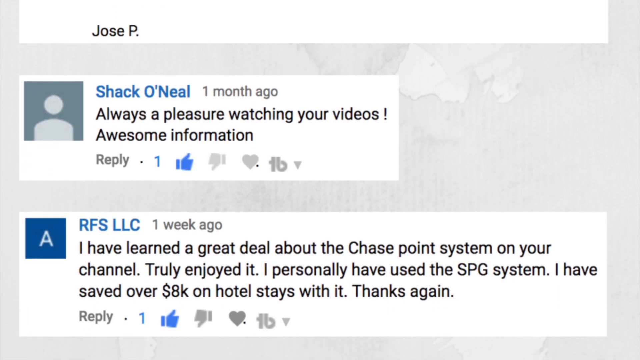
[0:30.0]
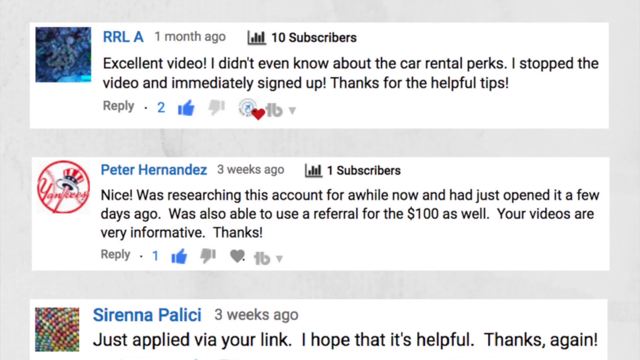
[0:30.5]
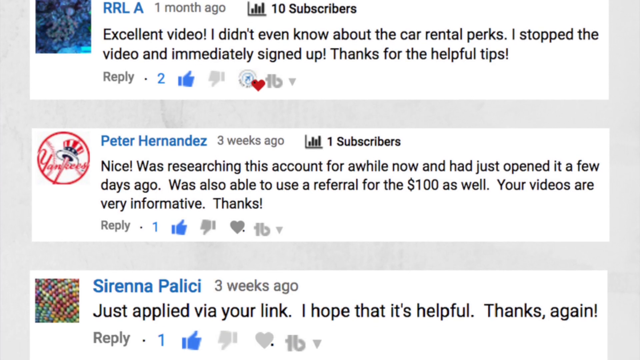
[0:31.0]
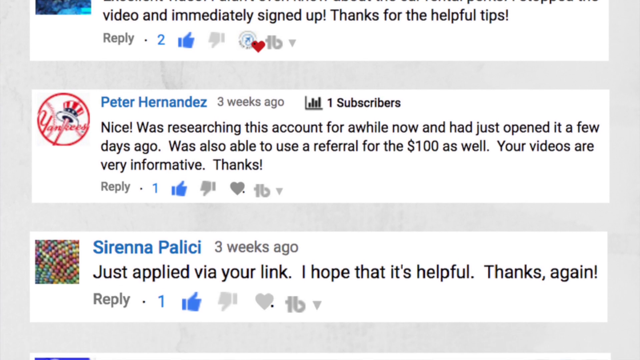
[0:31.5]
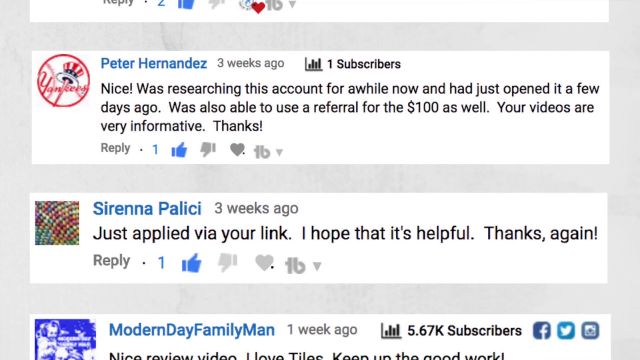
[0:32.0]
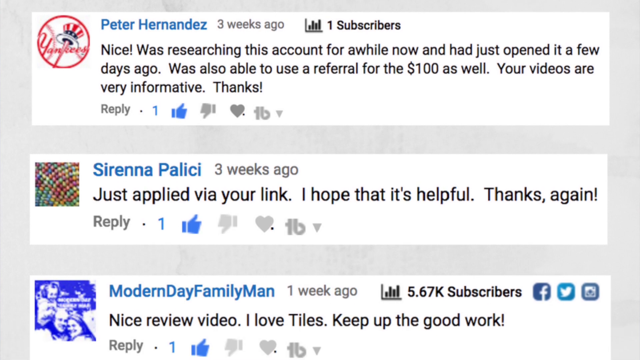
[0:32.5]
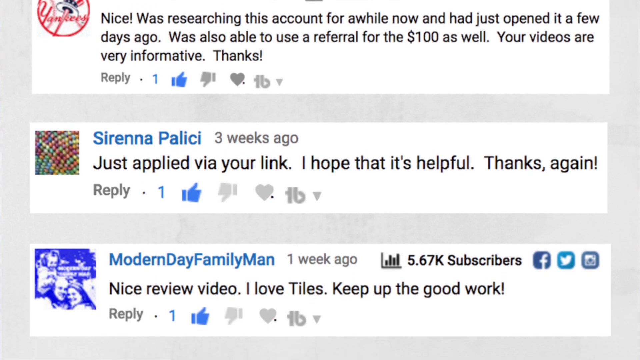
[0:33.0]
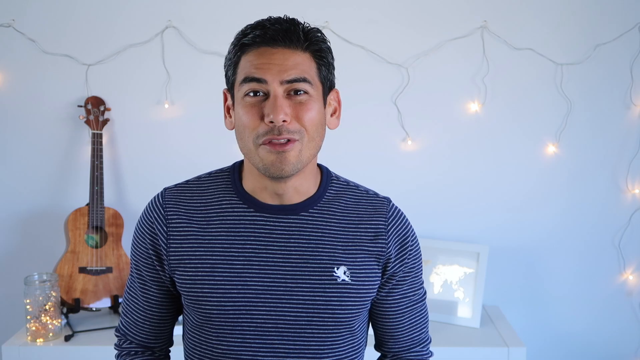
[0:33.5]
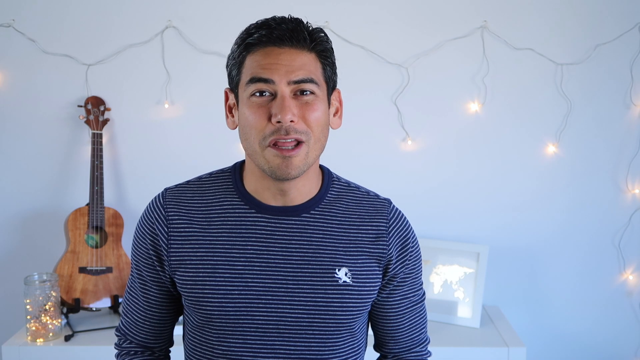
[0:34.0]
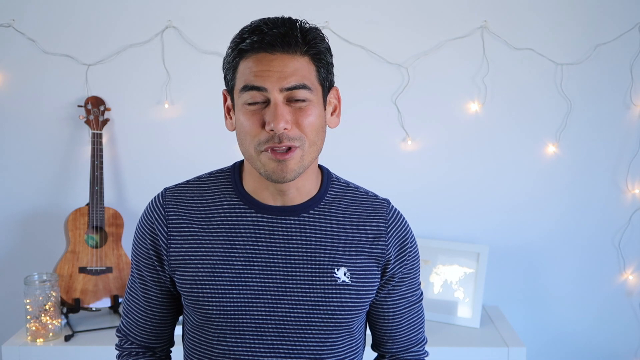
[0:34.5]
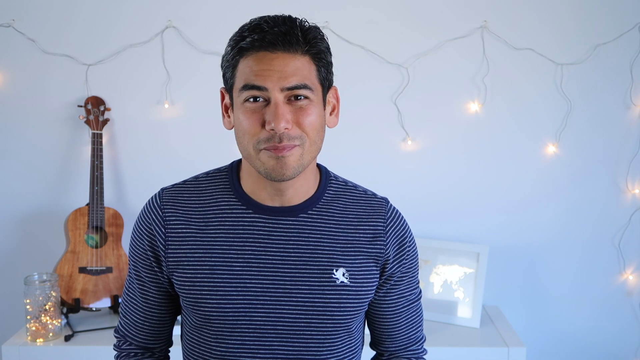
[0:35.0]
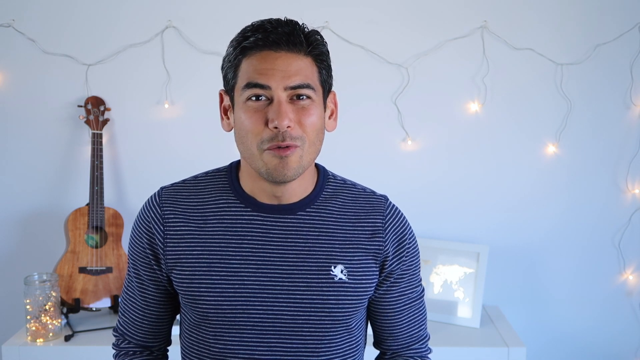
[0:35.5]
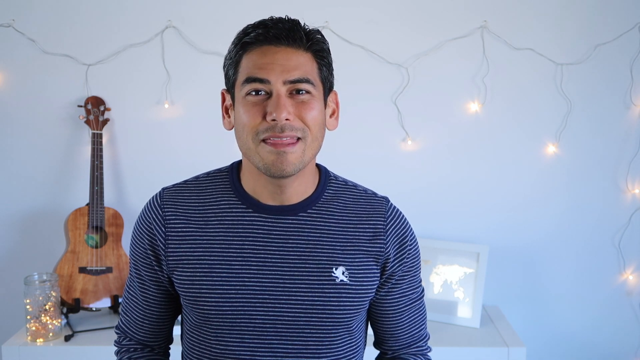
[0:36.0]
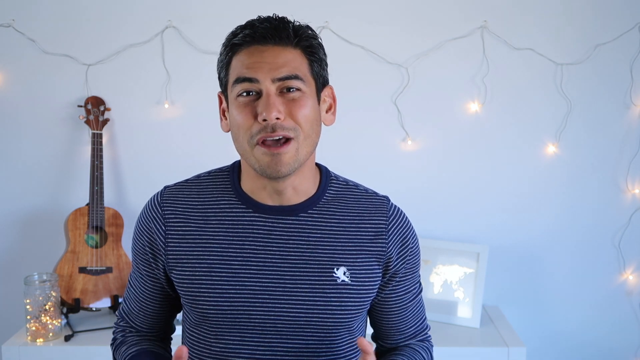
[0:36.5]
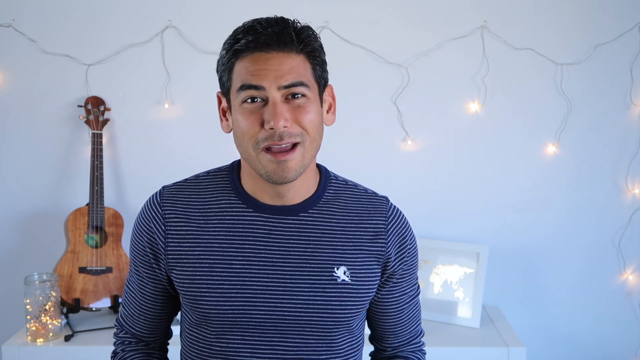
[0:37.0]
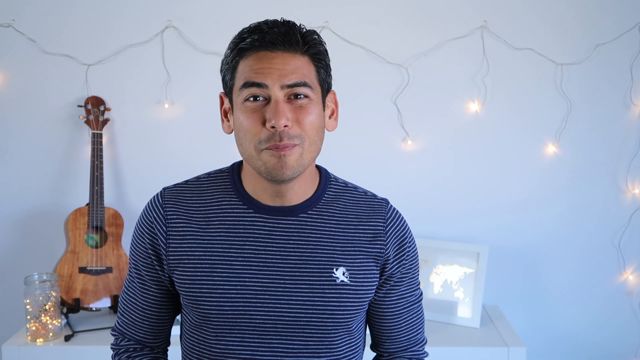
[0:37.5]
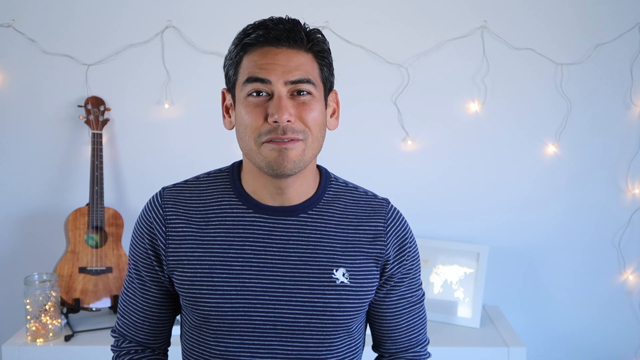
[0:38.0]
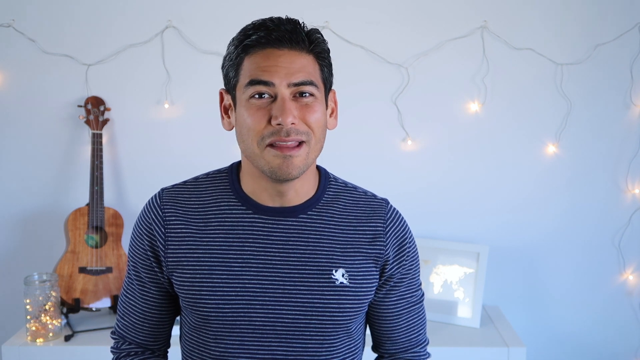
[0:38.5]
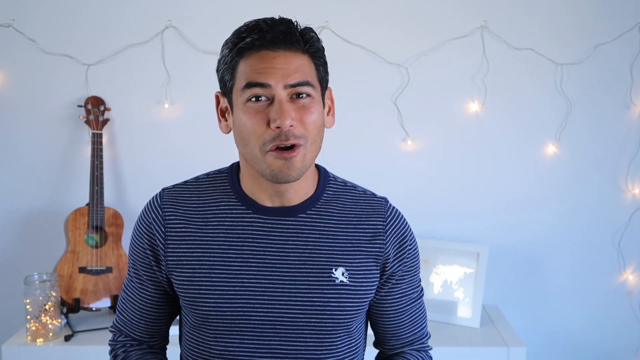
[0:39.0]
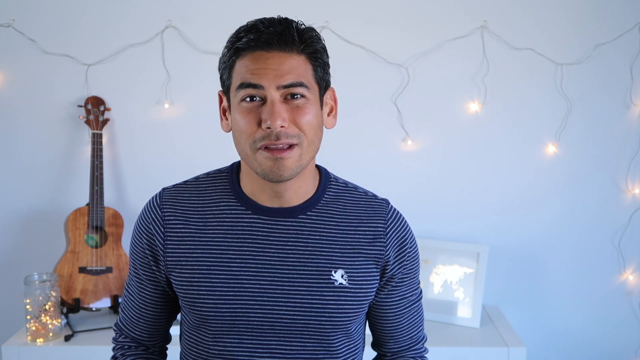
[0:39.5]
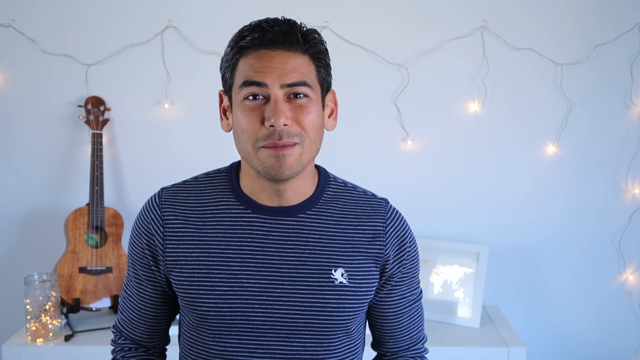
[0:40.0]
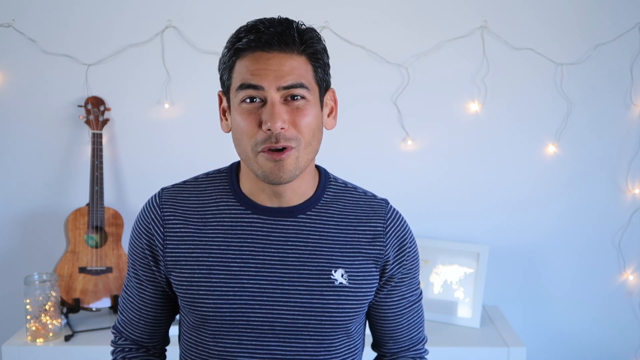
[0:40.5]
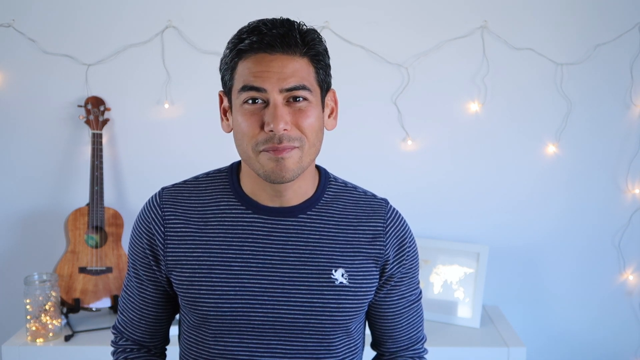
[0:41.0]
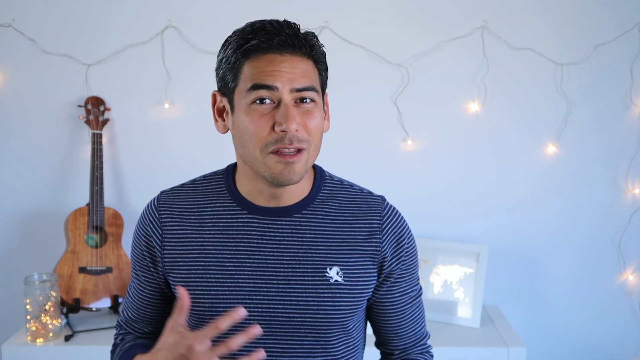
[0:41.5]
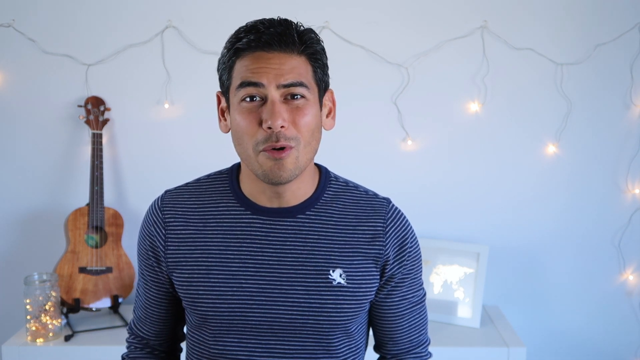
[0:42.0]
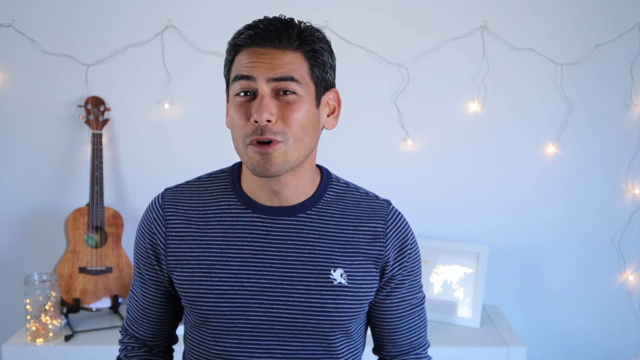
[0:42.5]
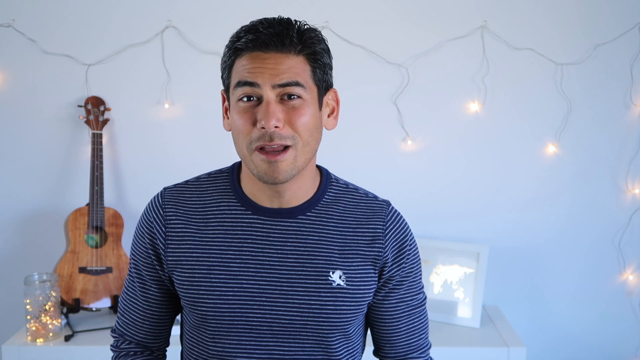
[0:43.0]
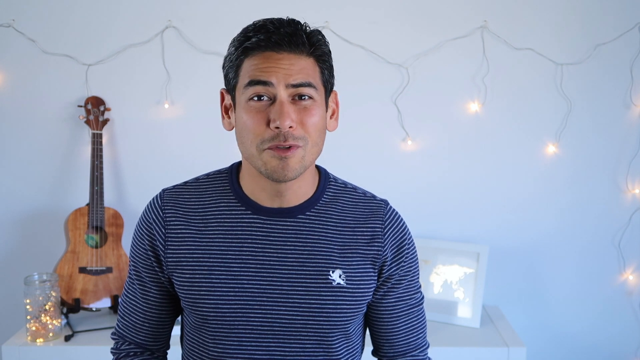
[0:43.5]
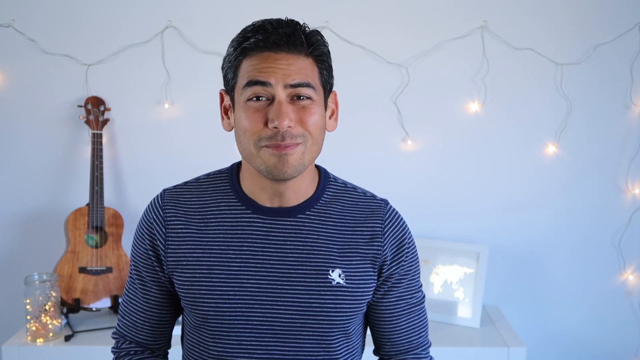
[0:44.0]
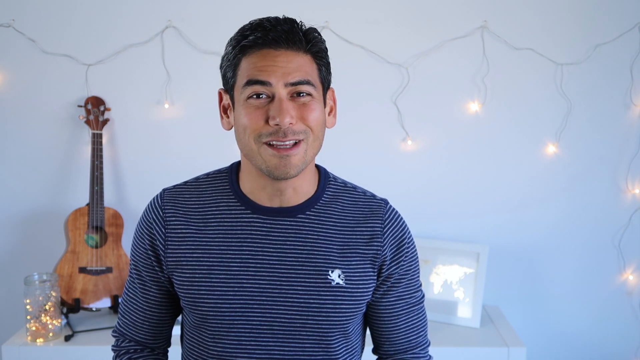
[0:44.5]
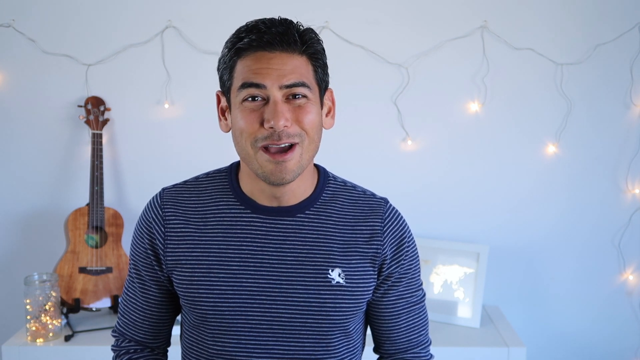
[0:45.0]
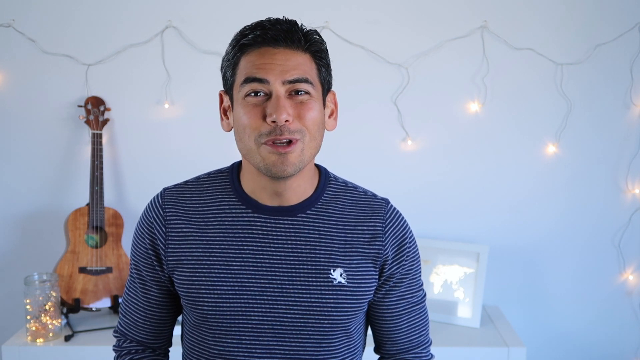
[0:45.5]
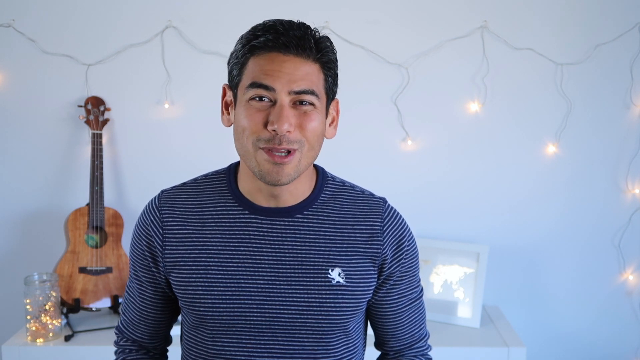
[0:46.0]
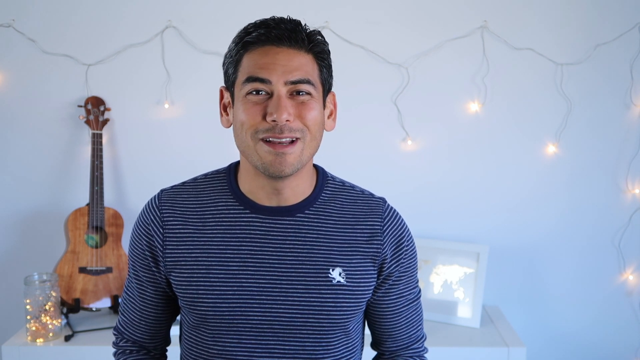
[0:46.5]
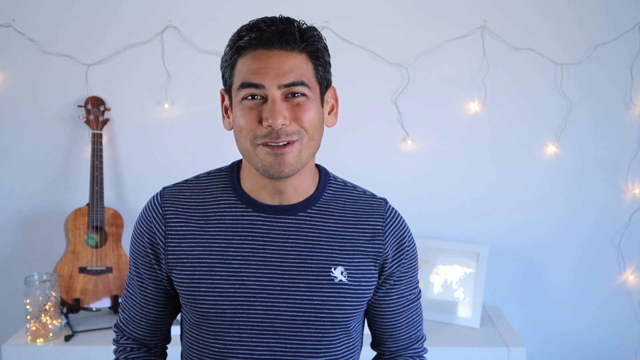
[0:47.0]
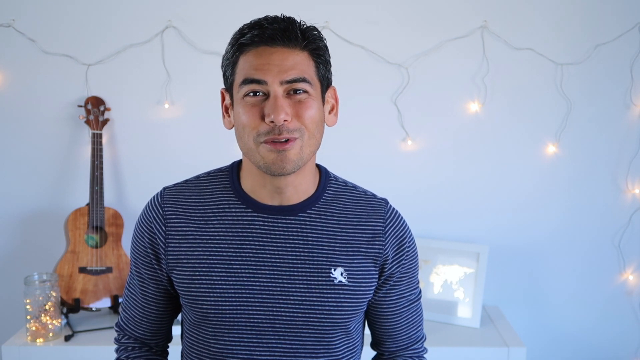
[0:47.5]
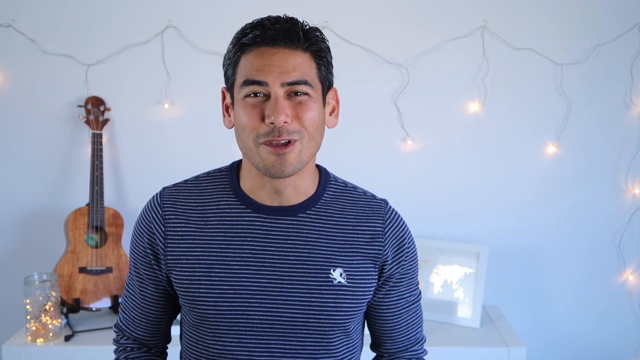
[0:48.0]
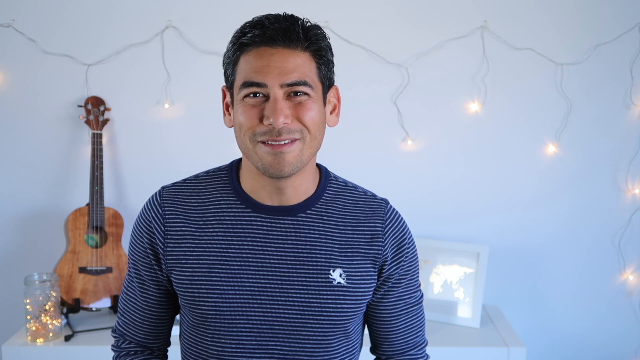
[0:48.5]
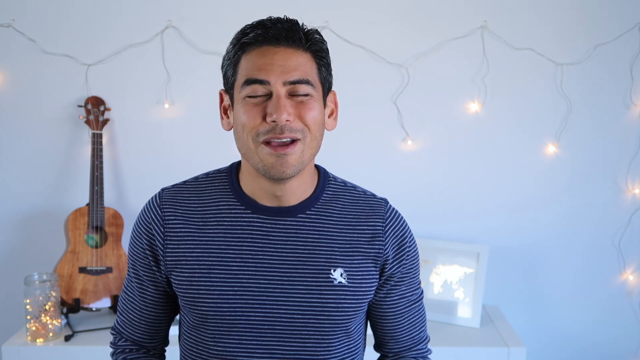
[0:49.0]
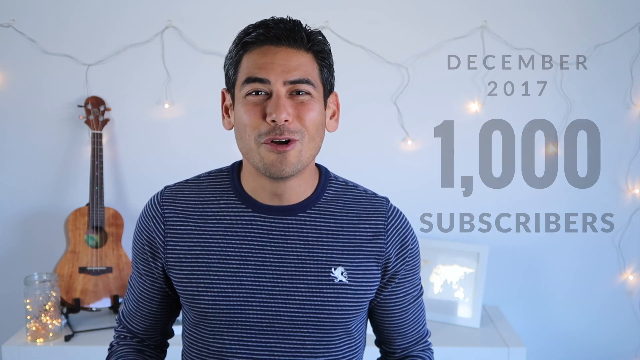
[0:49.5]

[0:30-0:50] Comments from social media posters are shown, including "excellent video I didn't even know about the car rental perks" and "Nice was researching this account for a while and I just opened it a few days ago." Many subscribers to the channel and people commenting appear as the view scrolls down through the comments. The video returns to the presenter in his room, where Christmas-tree-like lights hang from the white wall and a guitar is propped up on the left-hand side. Wearing a blue and white striped top, he speaks to the camera, uses his hand a few times to gesture or make a point, and is mostly smiling. At the very end, text on the right-hand side of the video reads "December 2017", "1000" and "subscribers", apparently marking a milestone; the "1000" is in a very large font, while "December 2017" and "subscribers" are smaller.